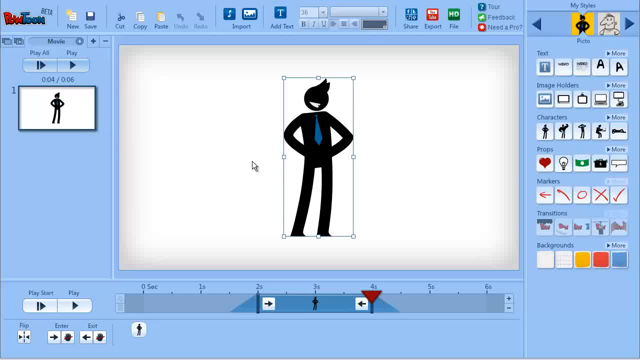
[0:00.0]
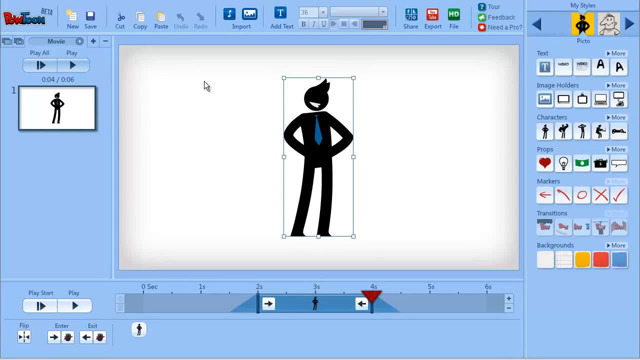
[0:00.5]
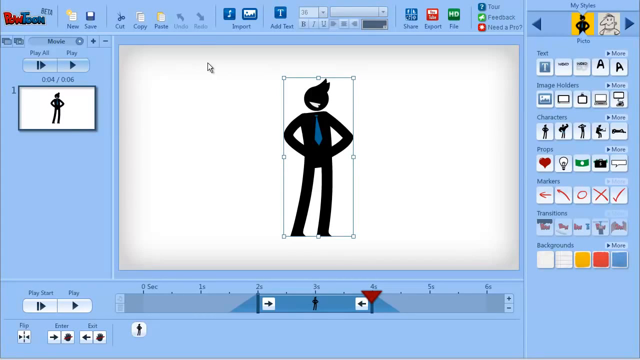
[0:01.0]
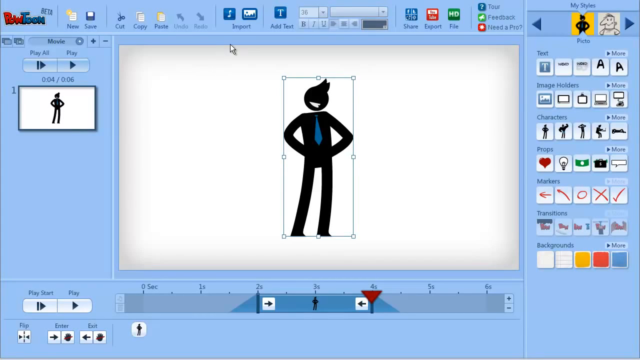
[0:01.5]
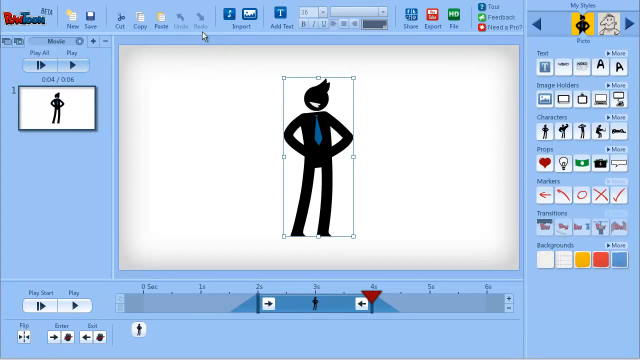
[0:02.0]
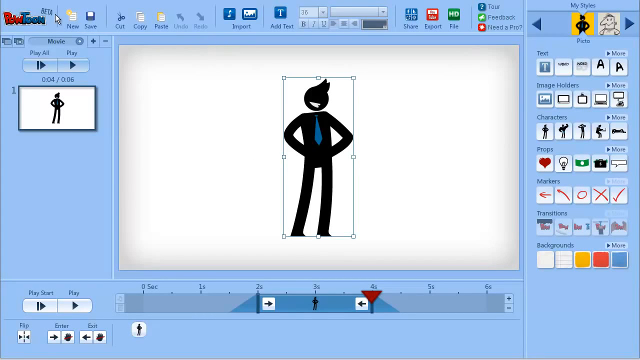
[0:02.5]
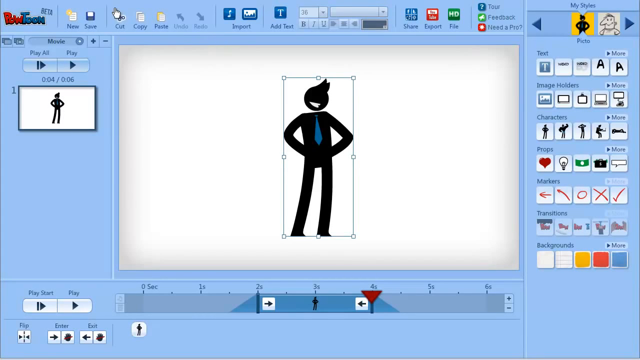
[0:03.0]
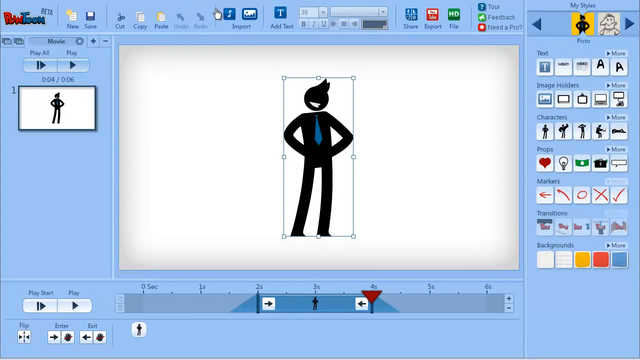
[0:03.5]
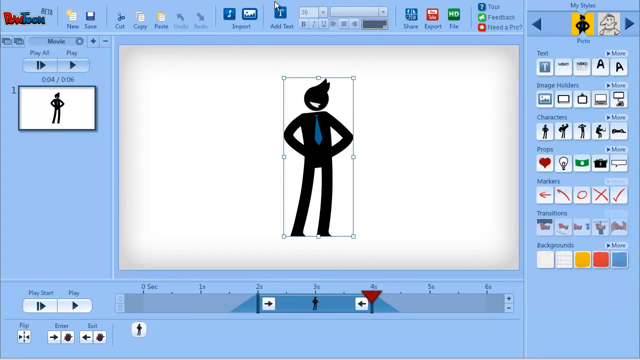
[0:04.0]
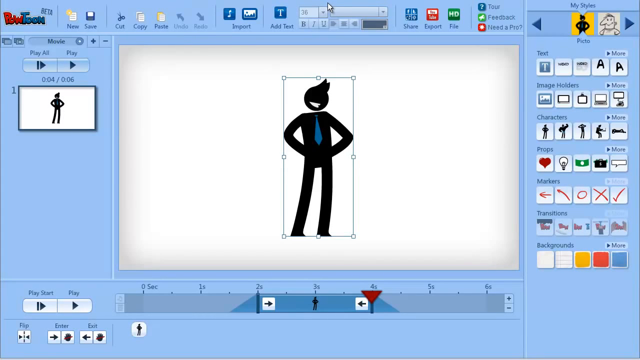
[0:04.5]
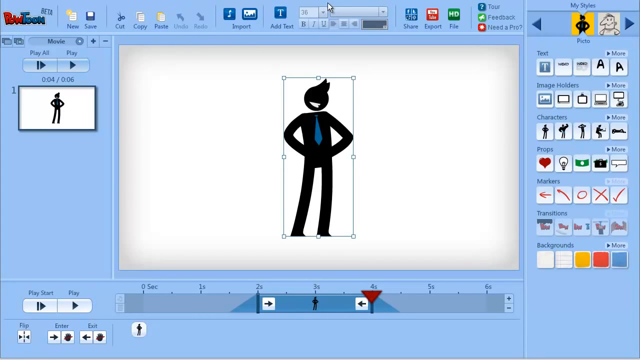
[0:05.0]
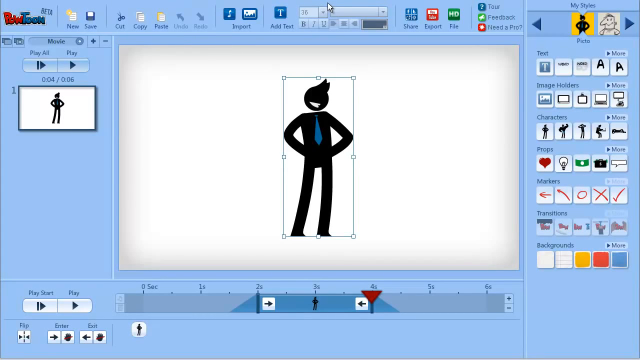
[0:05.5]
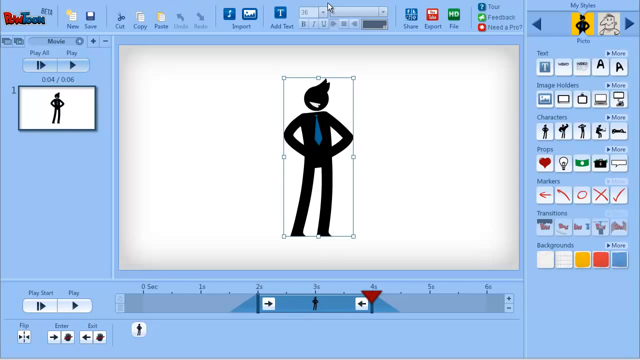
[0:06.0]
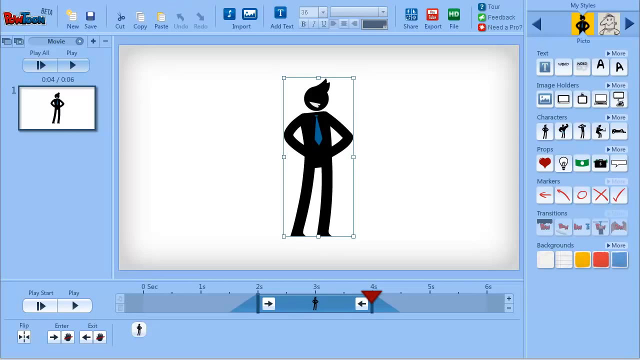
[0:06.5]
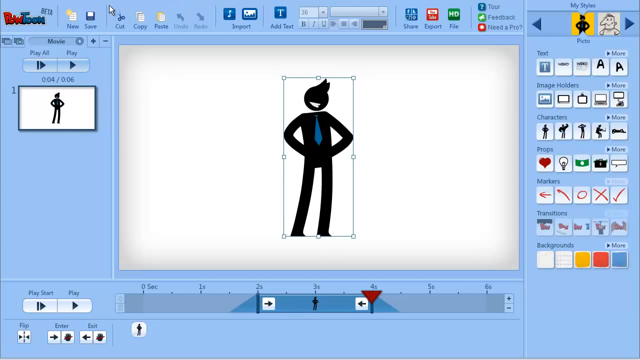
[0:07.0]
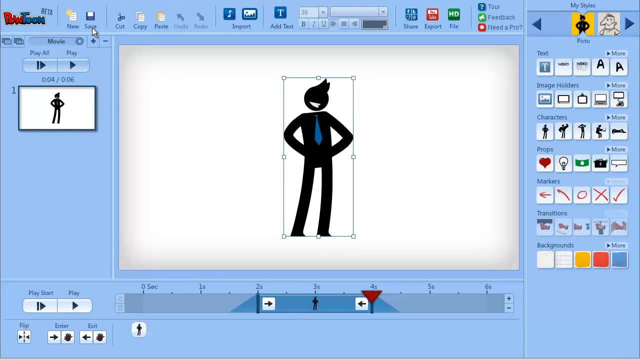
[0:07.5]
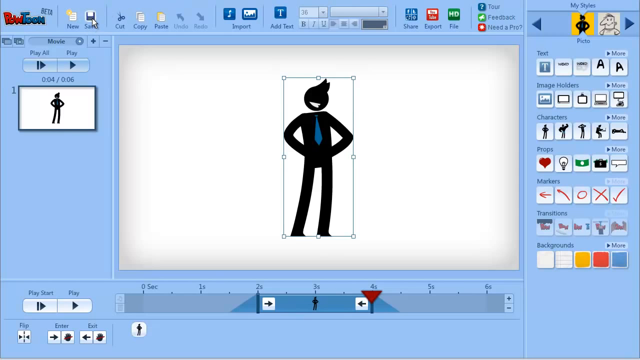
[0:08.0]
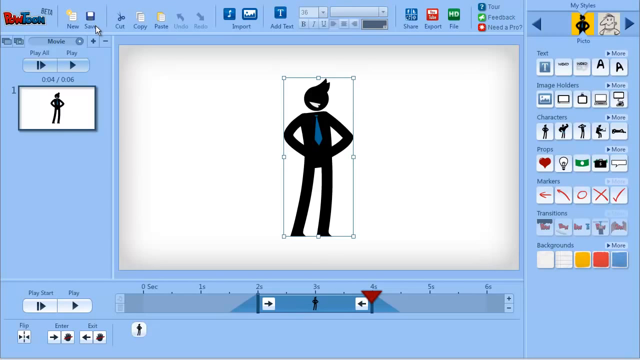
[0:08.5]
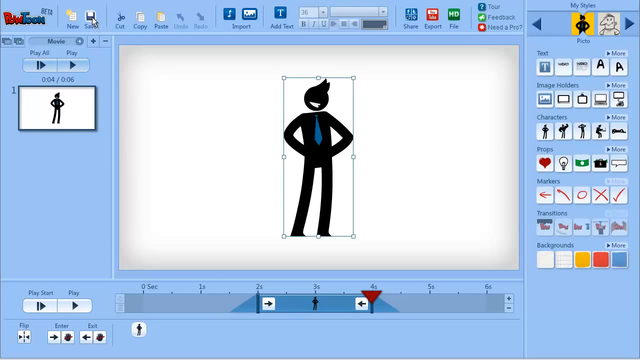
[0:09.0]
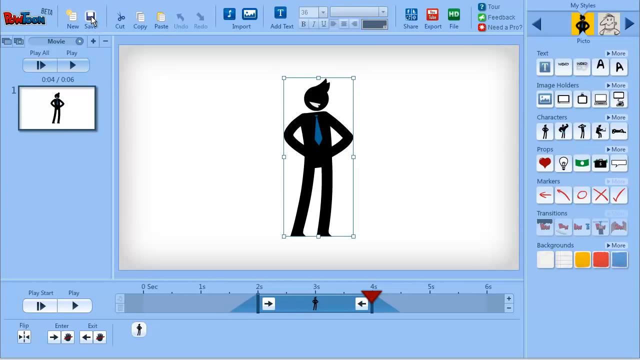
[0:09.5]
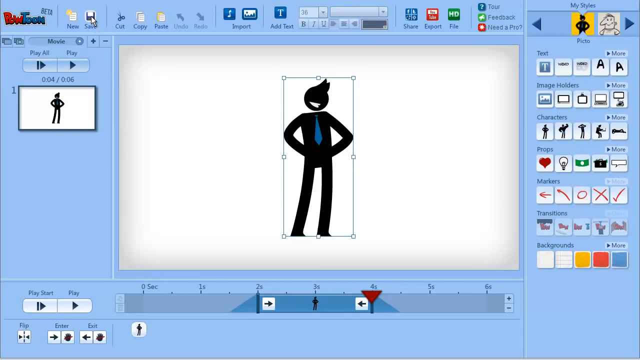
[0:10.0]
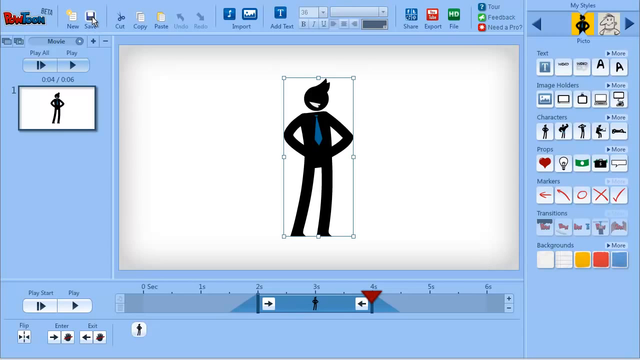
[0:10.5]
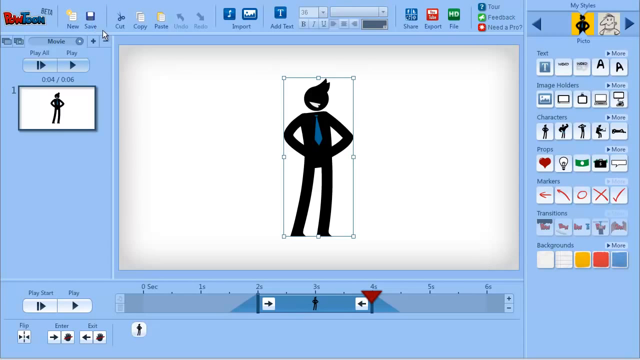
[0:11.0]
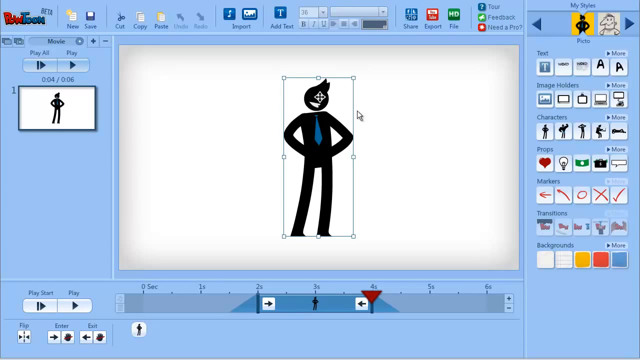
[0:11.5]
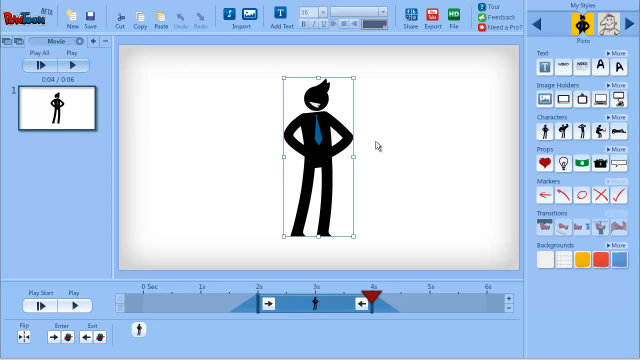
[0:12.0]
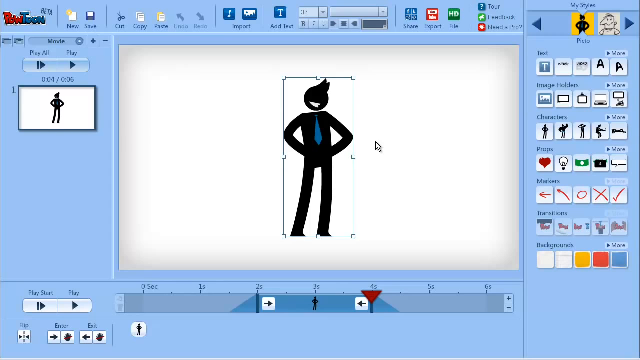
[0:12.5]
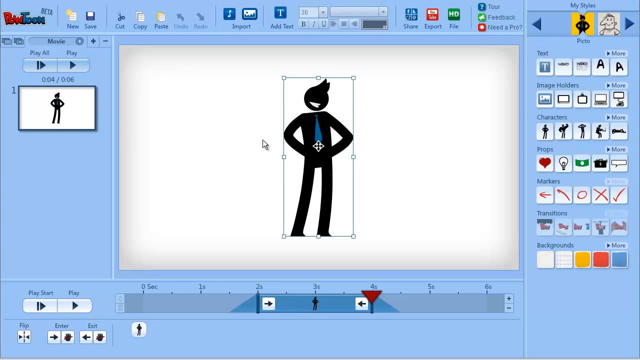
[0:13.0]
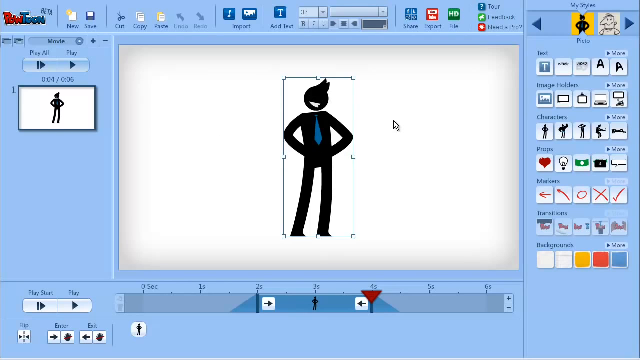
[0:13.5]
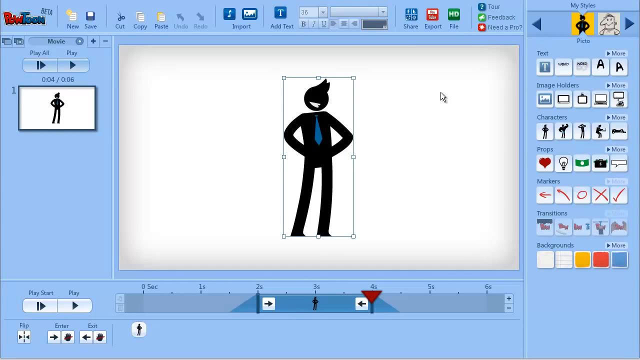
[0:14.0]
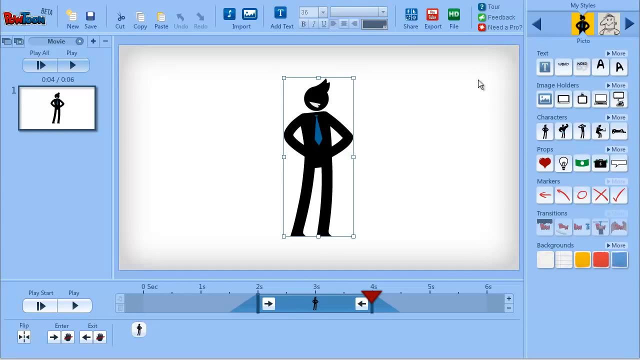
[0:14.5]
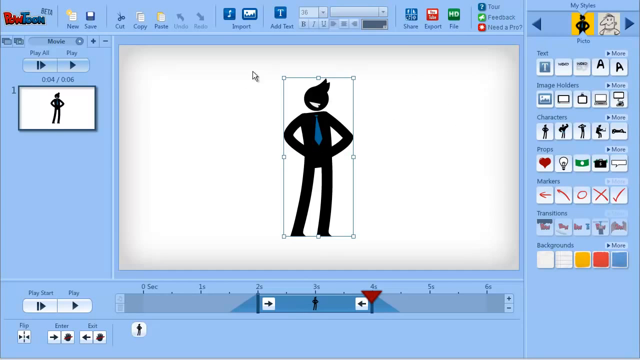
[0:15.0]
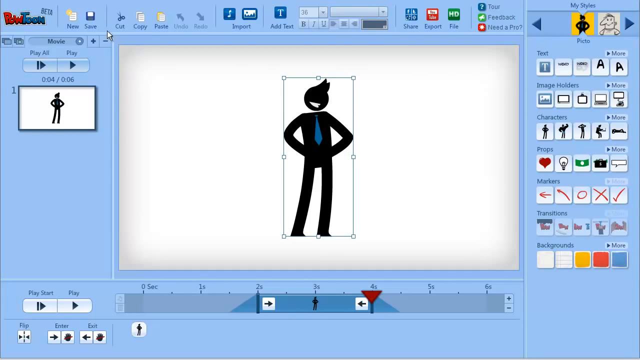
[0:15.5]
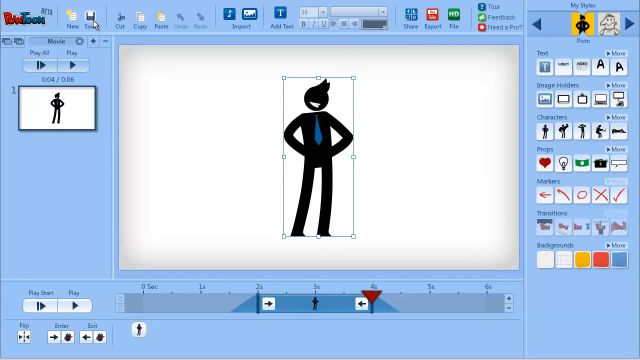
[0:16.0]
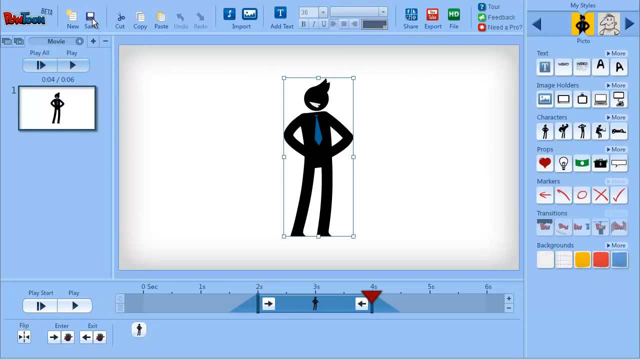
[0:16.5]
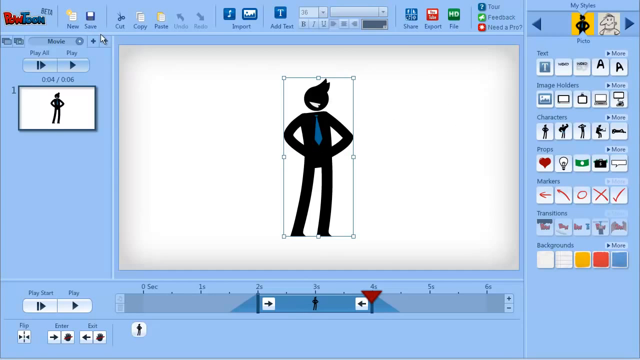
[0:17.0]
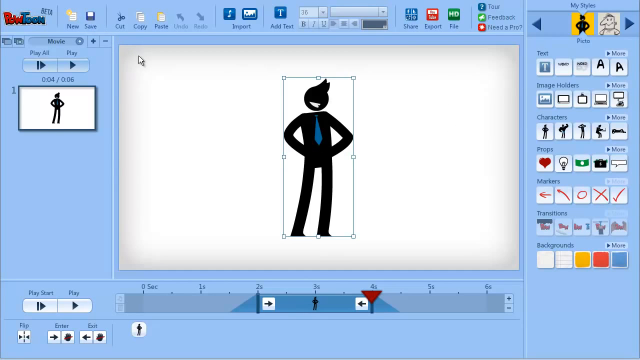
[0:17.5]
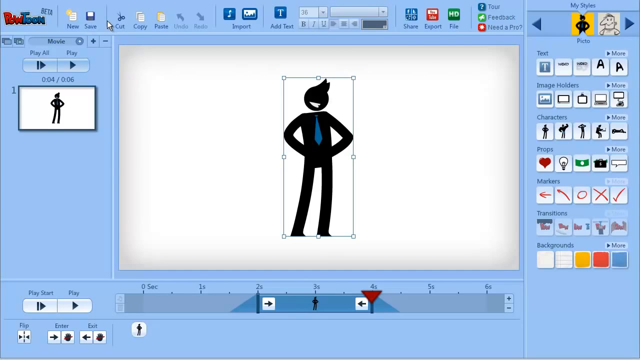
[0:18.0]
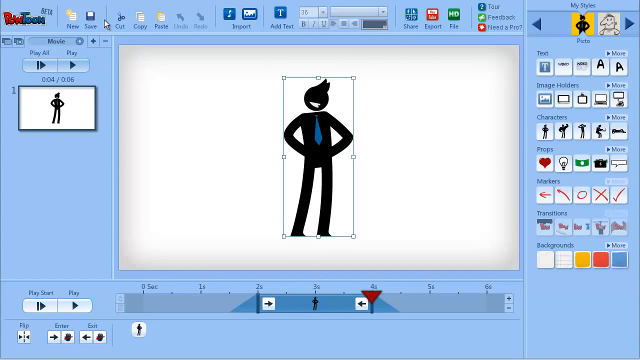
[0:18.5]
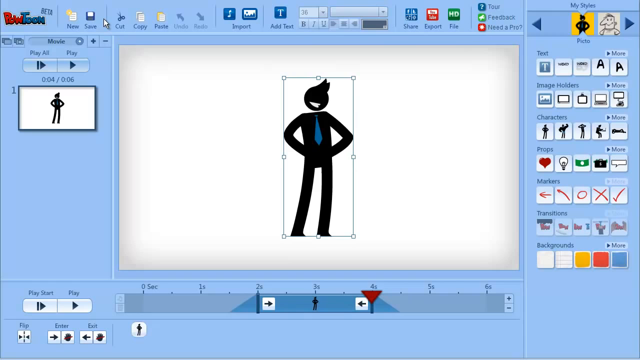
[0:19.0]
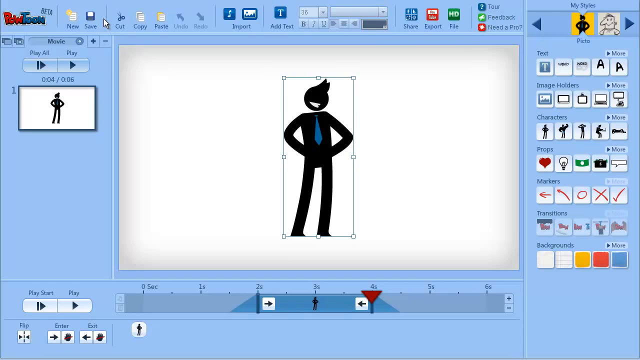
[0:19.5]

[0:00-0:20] The video opens on what looks like the beginning of an animation: a solid black outline of what appears to be a male figure wearing a blue necktie. Someone is working in video editing or similar software, clicking around, seemingly deciding how to colorize the figure and what to do with it; they apparently seem to be about to make an avatar or cartoon. Around the screen are various palettes: color palettes and what appear to be shape, shading and outline palettes. The mouse moves around the screen as if about to perform an action. The figure, potentially male, has its hands on its hips, though the hands are not visible and there are no feet. It resembles a thick stick figure with kind of a jack-in-the-box head, a slightly jutting hairdo and a blue necktie that stands out noticeably.